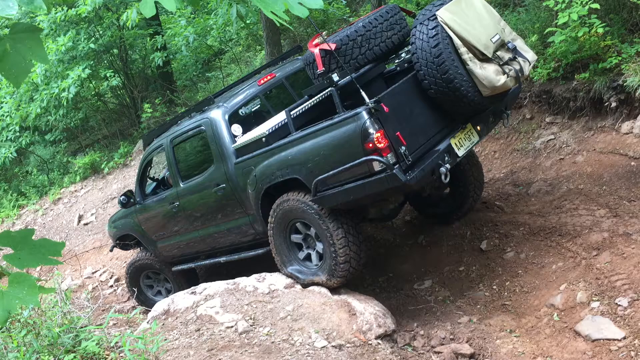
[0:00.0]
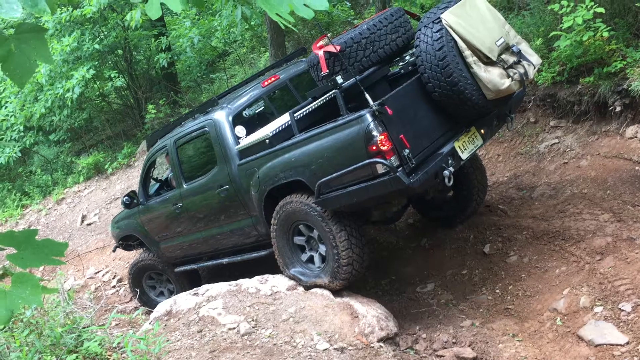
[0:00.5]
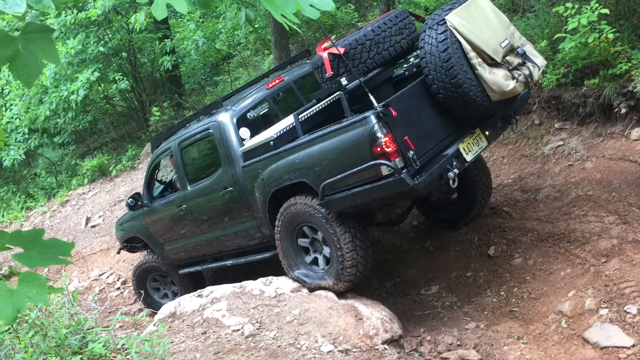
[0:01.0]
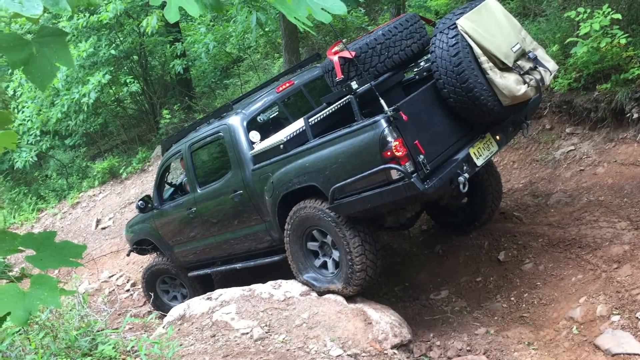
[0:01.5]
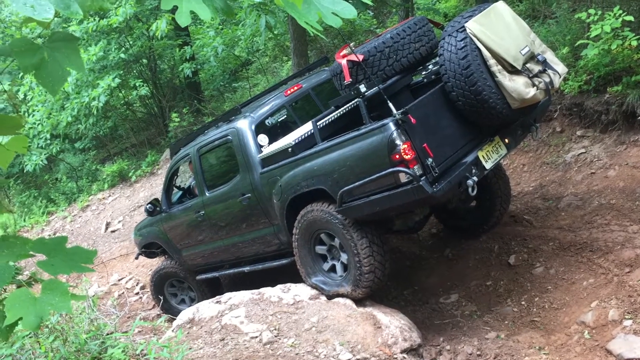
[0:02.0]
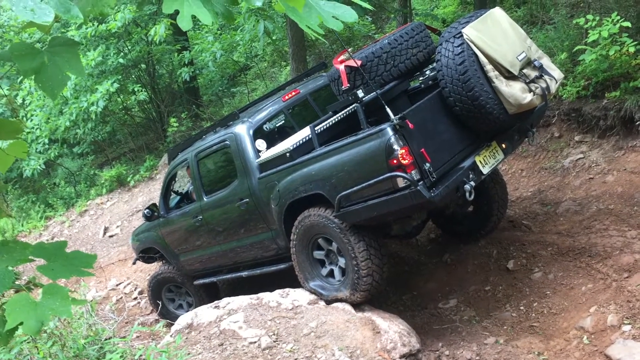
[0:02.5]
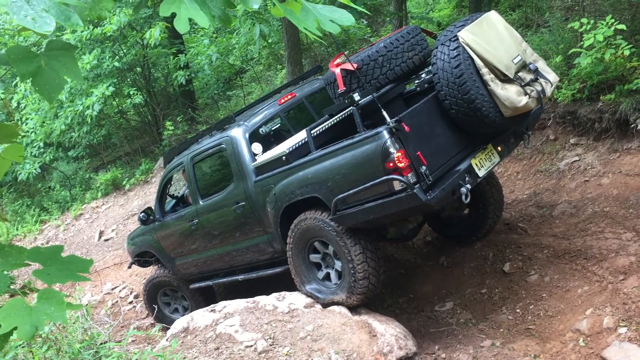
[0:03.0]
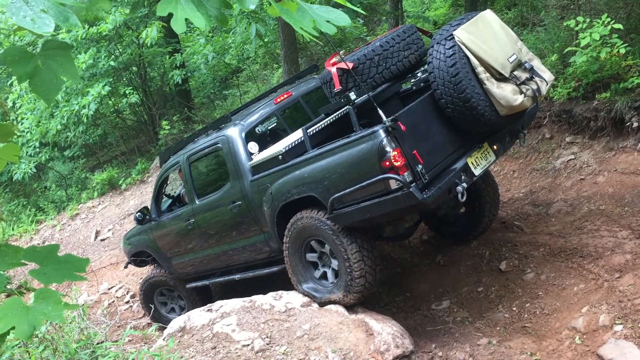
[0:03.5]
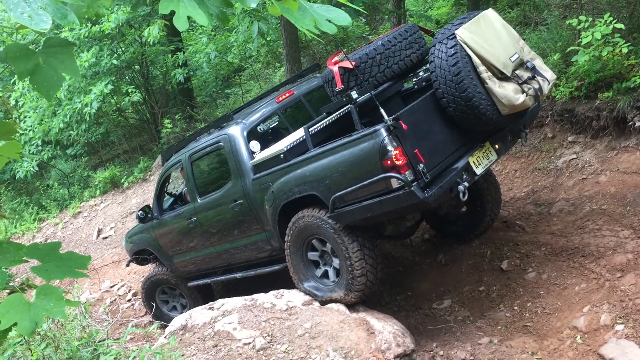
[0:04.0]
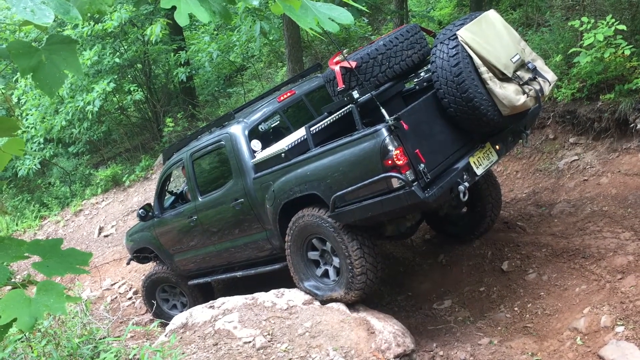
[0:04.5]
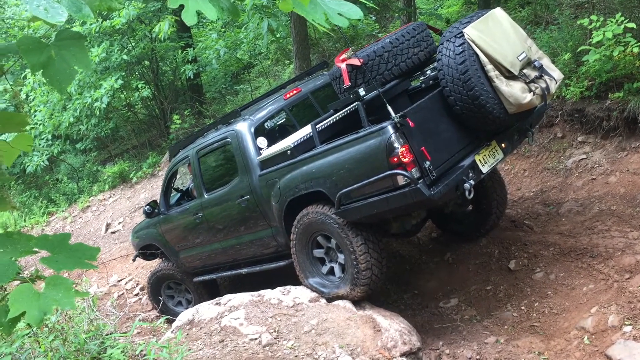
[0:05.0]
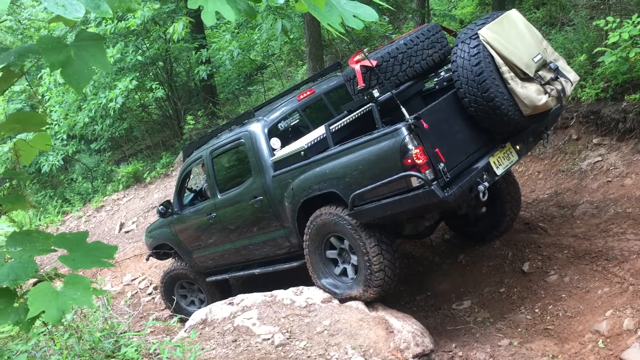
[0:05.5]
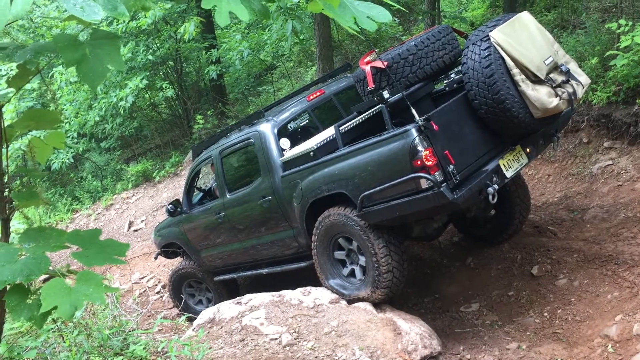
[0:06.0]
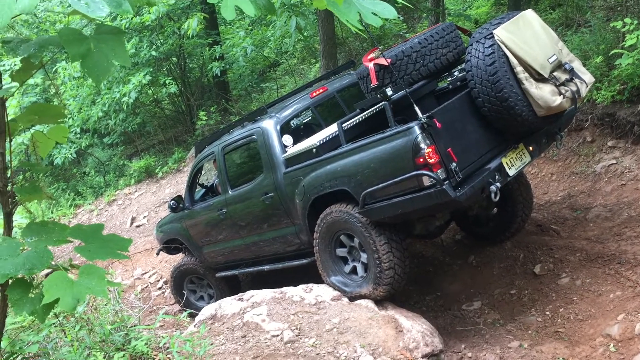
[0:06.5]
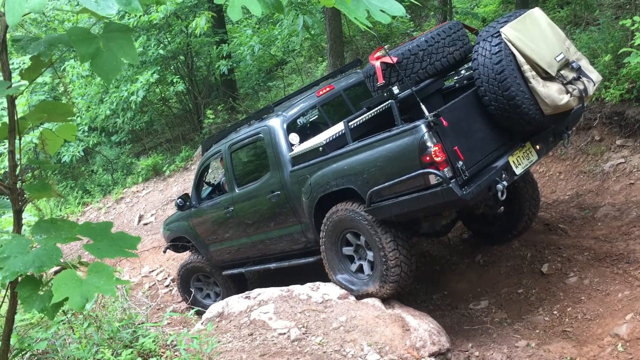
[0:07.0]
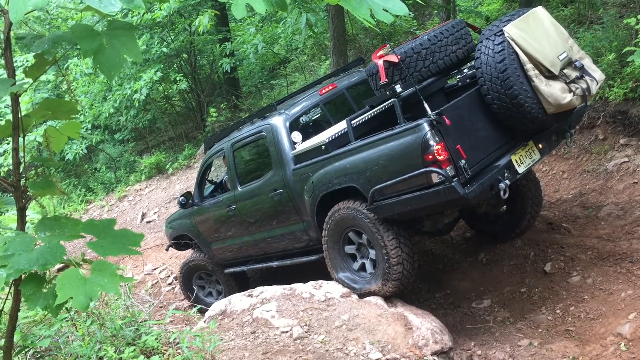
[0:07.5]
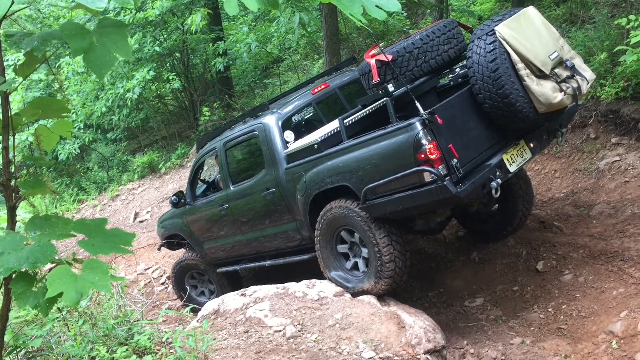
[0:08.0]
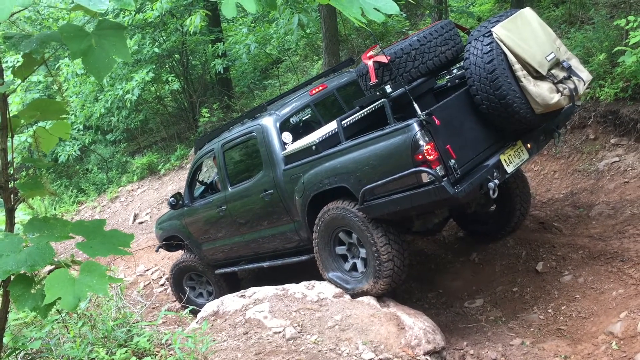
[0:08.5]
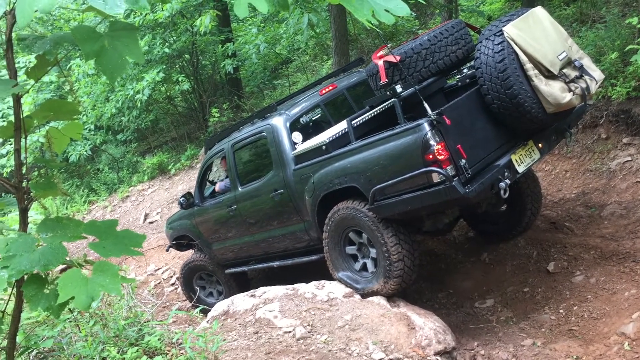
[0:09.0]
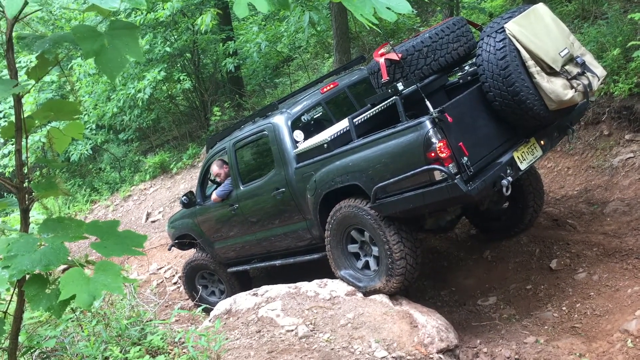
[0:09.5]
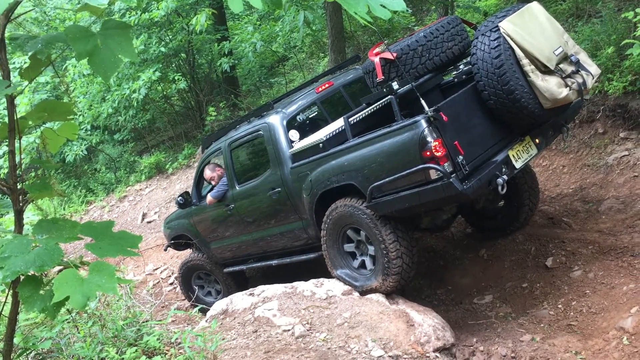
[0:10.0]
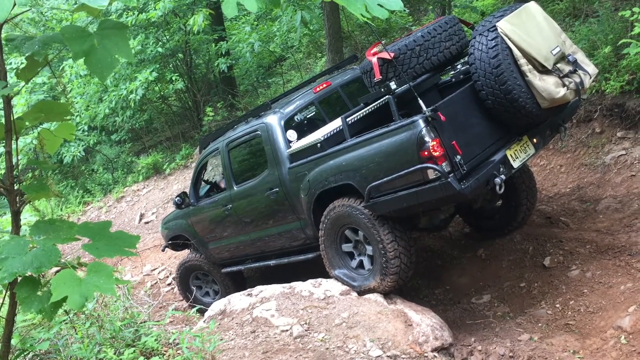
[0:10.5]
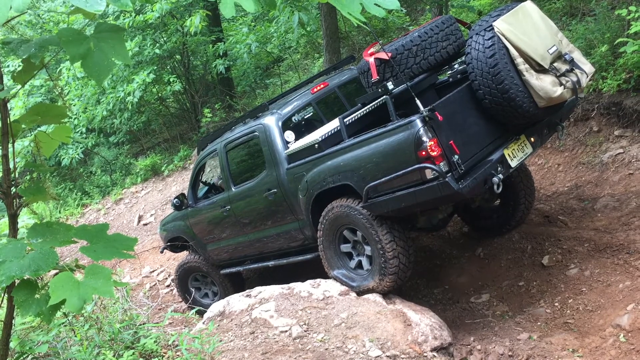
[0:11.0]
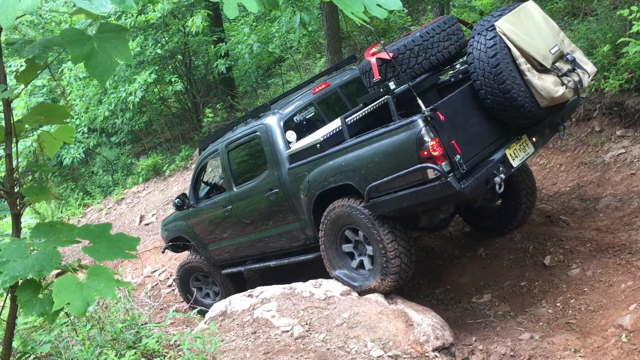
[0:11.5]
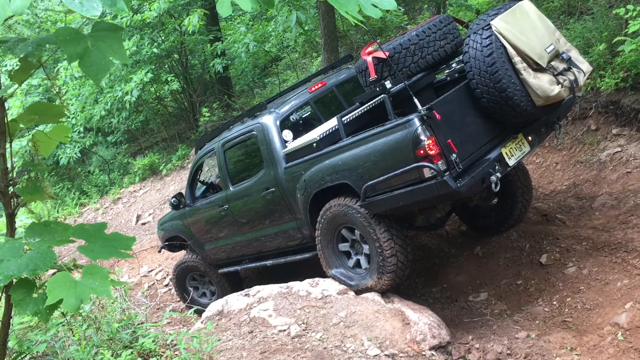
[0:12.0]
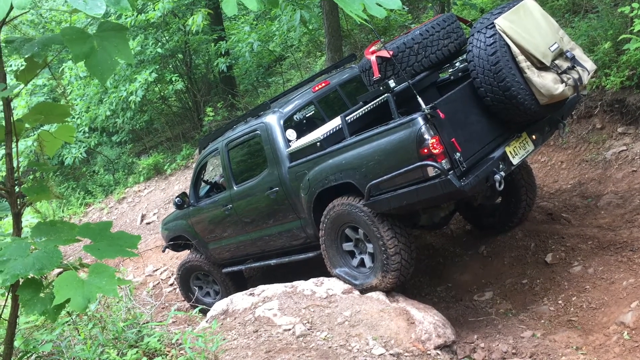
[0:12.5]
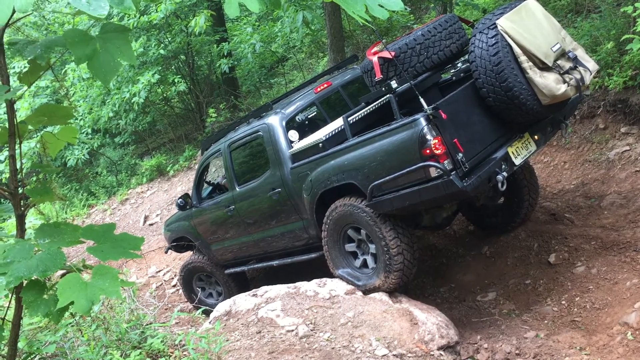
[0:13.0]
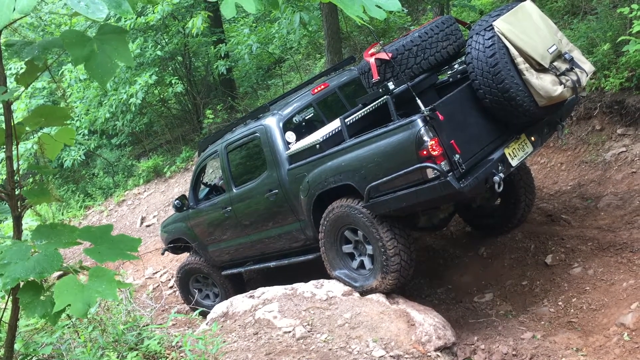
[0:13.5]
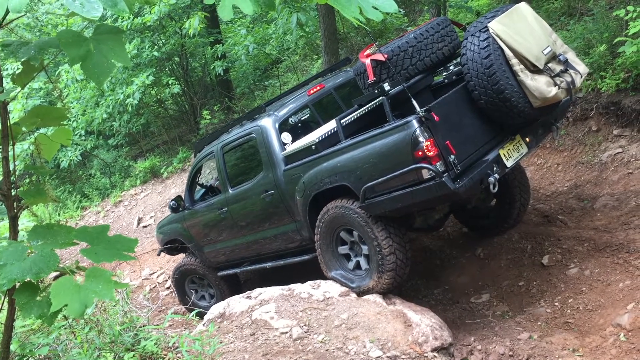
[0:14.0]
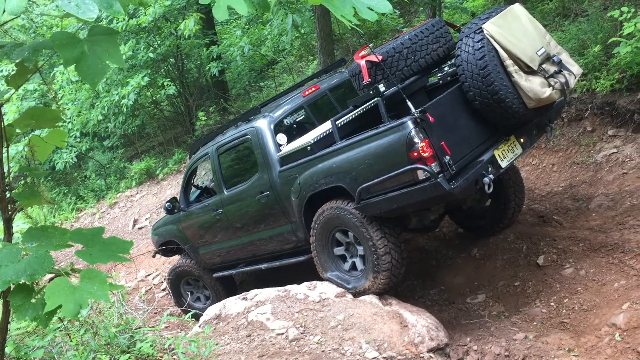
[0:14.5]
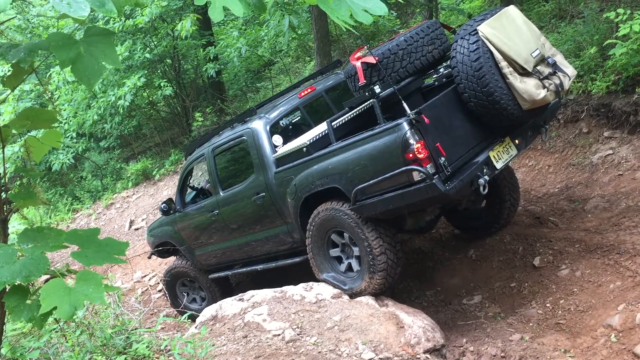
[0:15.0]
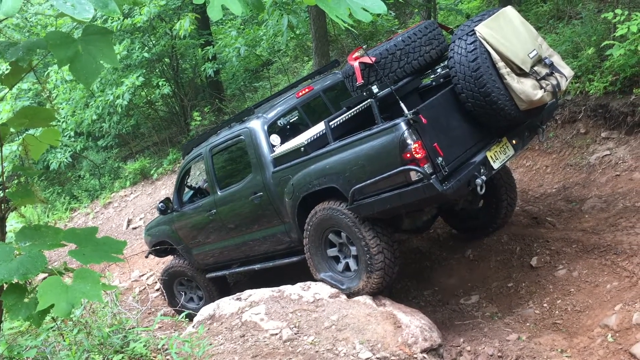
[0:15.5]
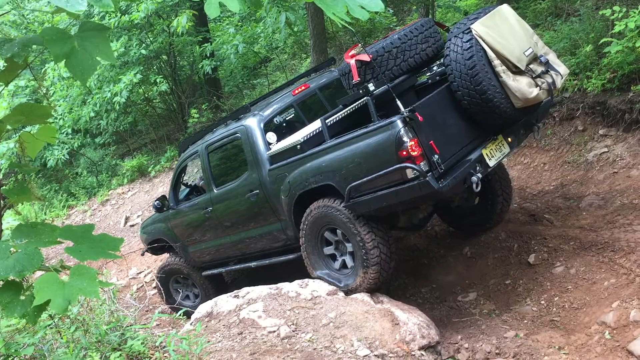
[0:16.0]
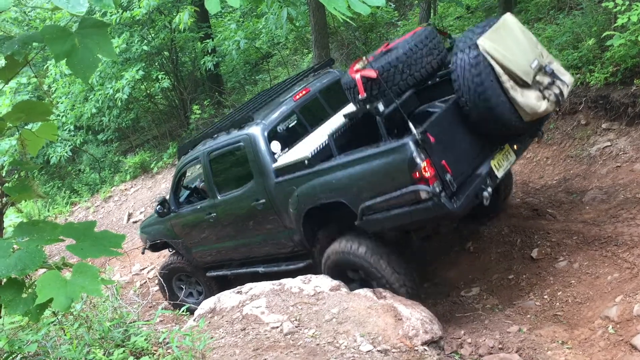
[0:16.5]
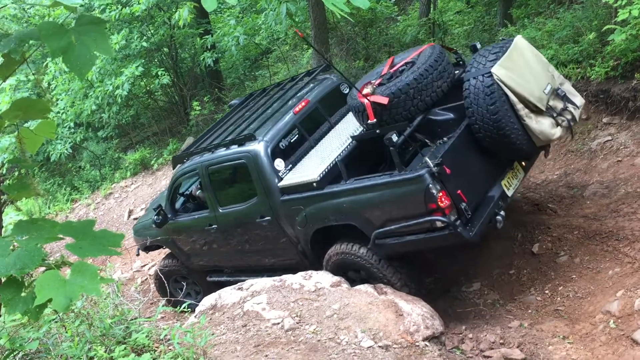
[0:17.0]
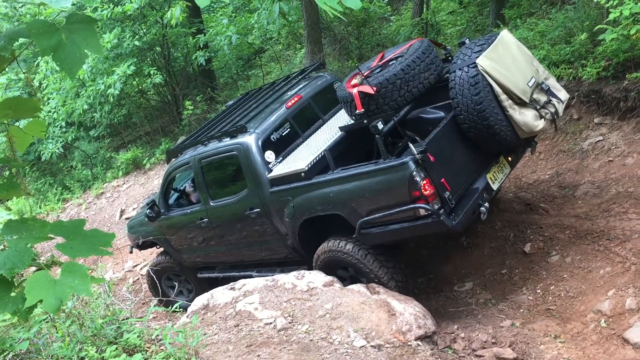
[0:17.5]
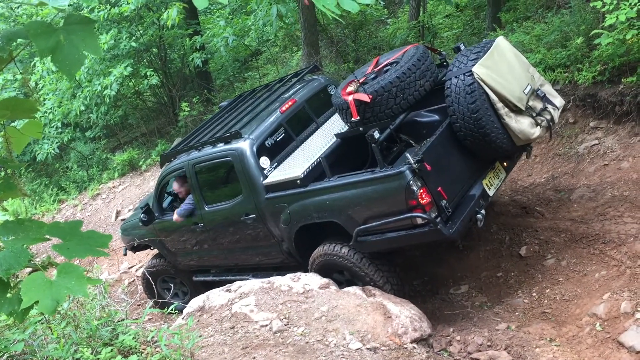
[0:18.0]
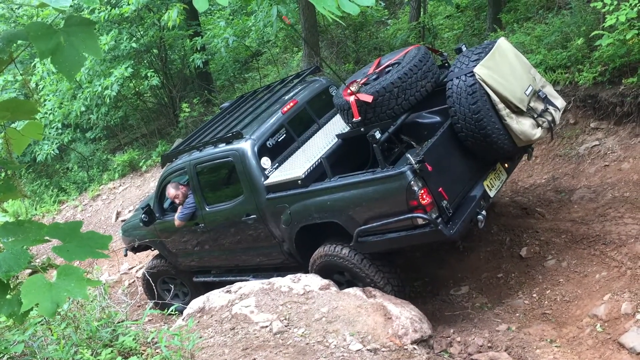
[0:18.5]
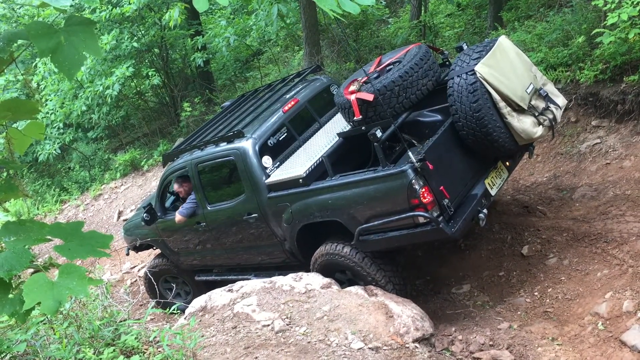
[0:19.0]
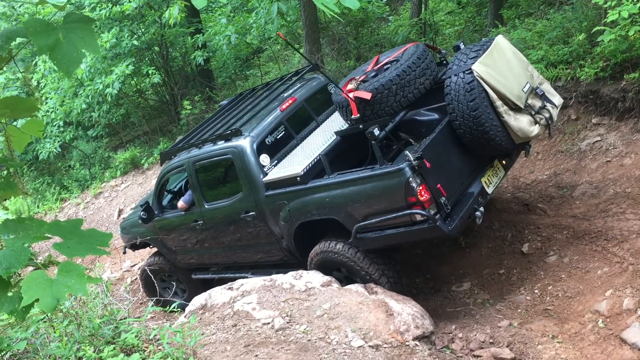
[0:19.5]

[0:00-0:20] The video is taken outdoors in the woods. Heavy, thick green woods run across the top of the frame, starting on the right side about two inches down and angling over to the left, going down about halfway. There is a little bit of leaf in the bottom left corner, a rock at the bottom coming up about two inches, and a dirt road across the center. On the dirt road, a black truck is headed down to the left. It has a tire strapped to the tailgate and another tire strapped on top in the bed, with a little thing holding it up. A toolbox is visible, the windows are tinted, and it has a yellow and white license plate. Its wheel is resting on the rock and looks about half flat as the truck sits there. The camera pans just a little left and right. A man with a kind of balding head, wearing a blue short-sleeve shirt, pokes his head out the window with his elbow out, looks back toward the camera, then goes back into the truck. The truck slowly rocks forward a little, and then the tire slips off the rock and slams down onto the ground pretty hard. The man leans out again with his elbow out the window, looks back at the tire, and starts to slowly drive forward.